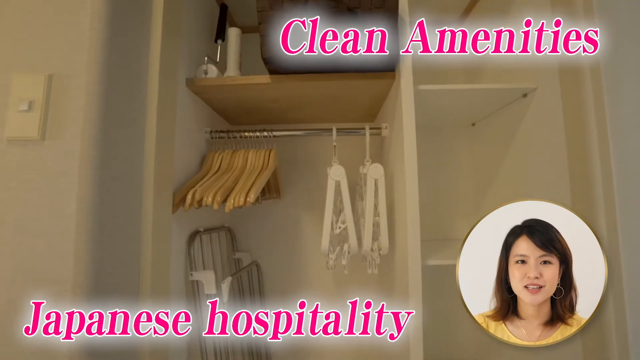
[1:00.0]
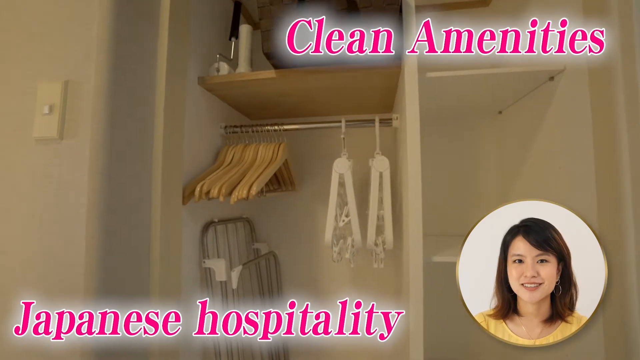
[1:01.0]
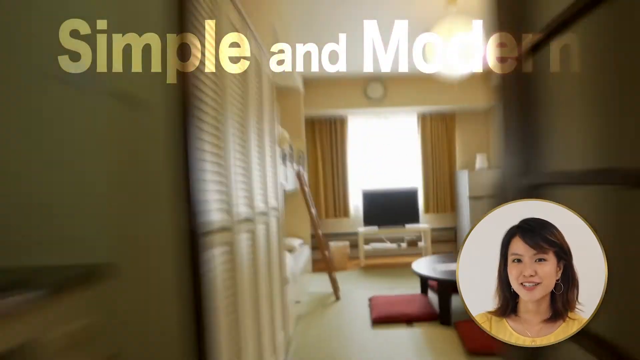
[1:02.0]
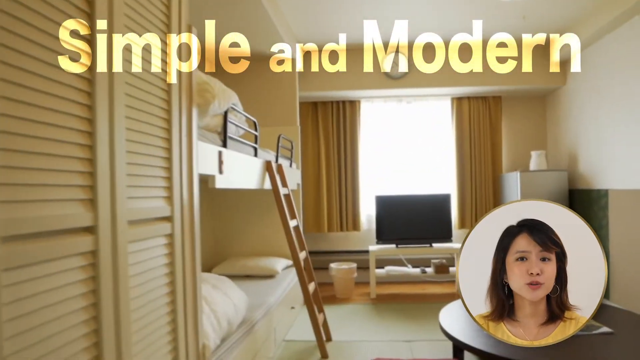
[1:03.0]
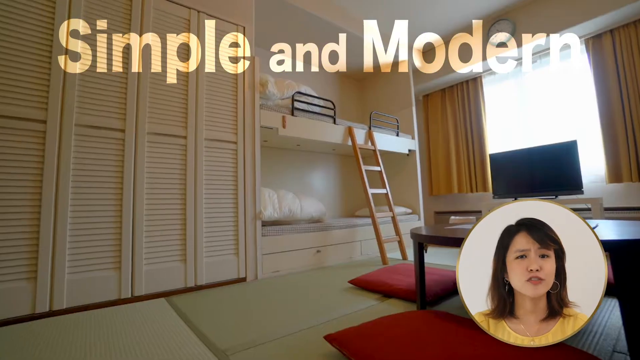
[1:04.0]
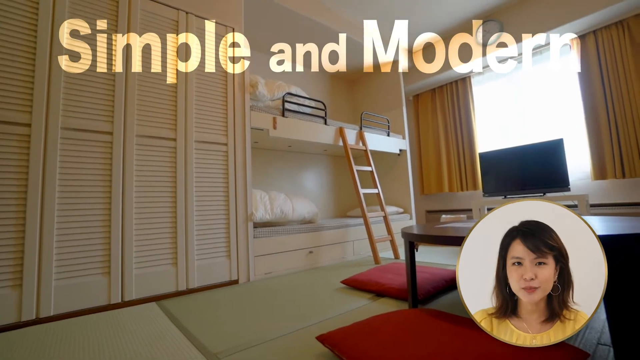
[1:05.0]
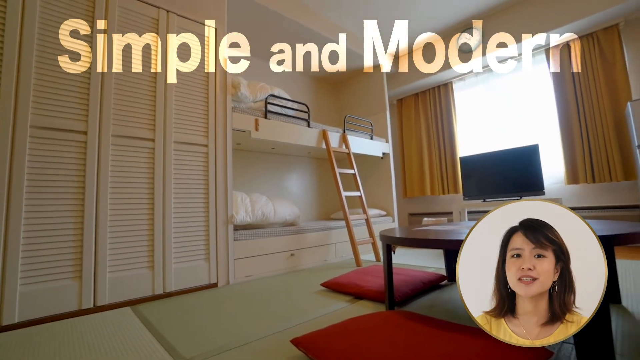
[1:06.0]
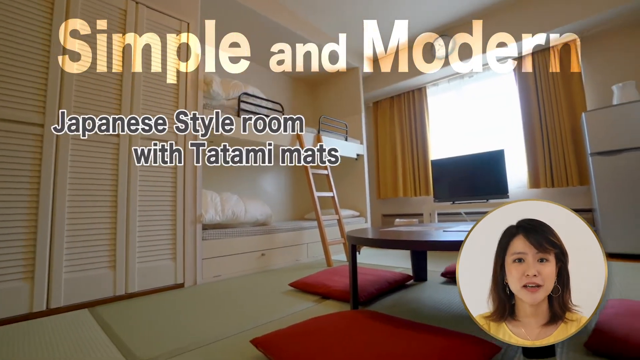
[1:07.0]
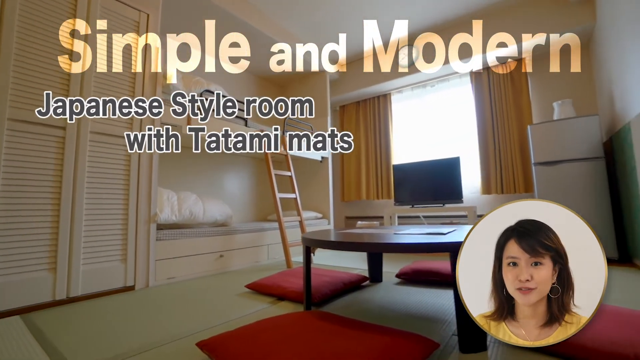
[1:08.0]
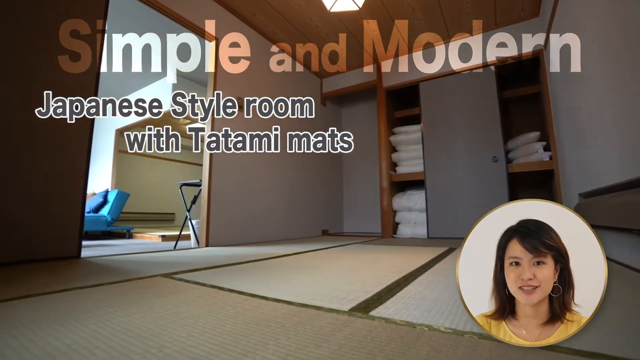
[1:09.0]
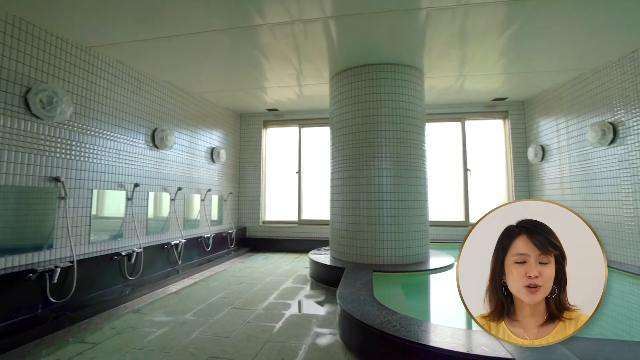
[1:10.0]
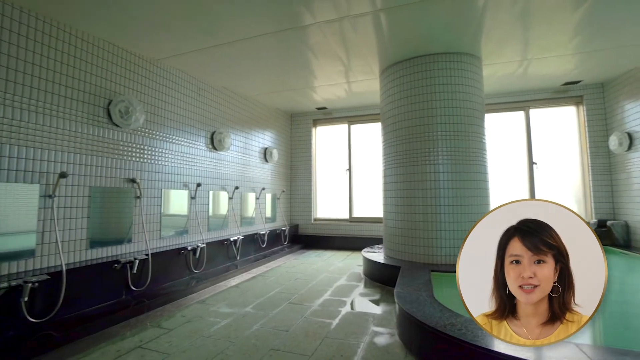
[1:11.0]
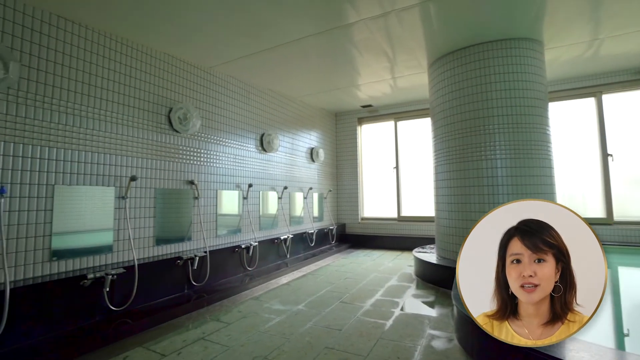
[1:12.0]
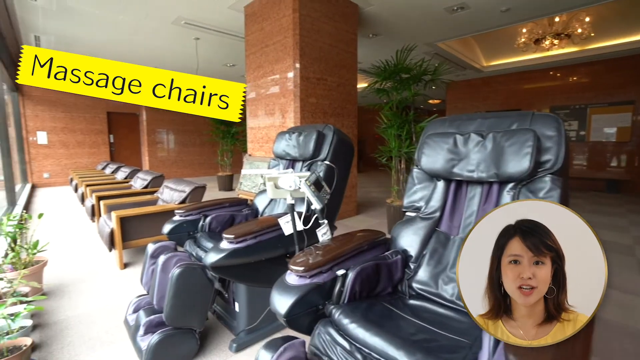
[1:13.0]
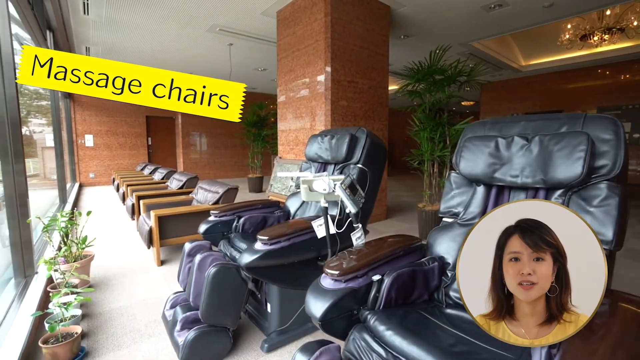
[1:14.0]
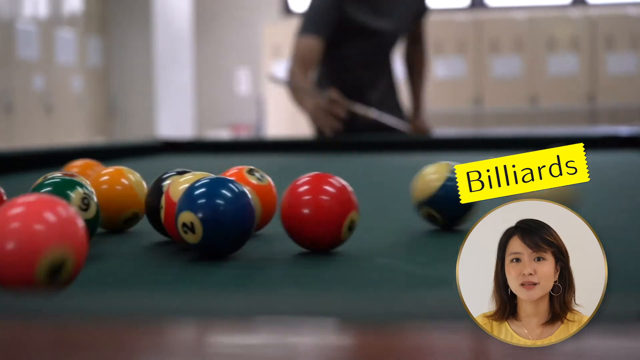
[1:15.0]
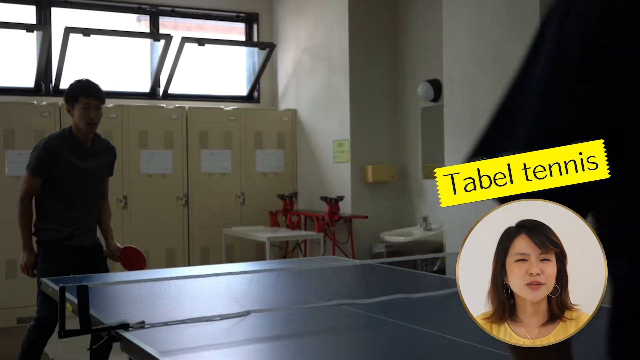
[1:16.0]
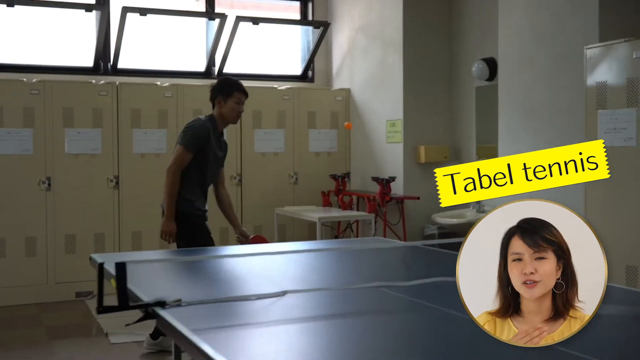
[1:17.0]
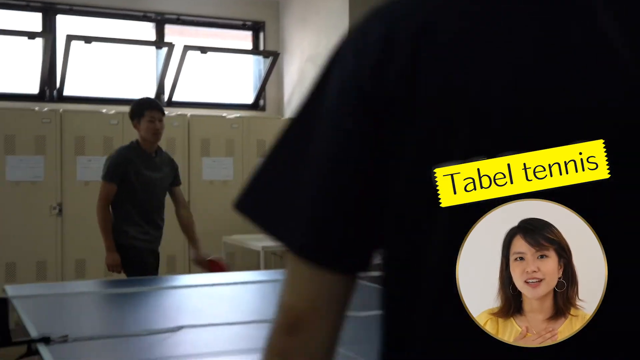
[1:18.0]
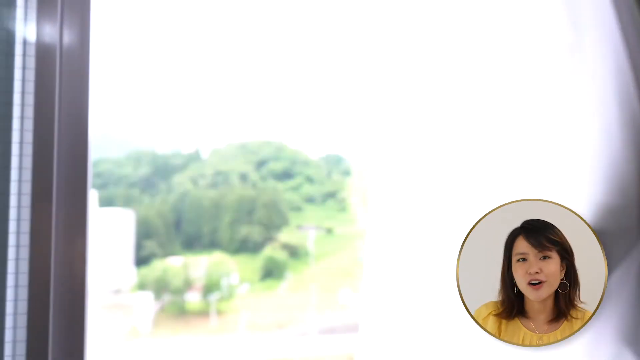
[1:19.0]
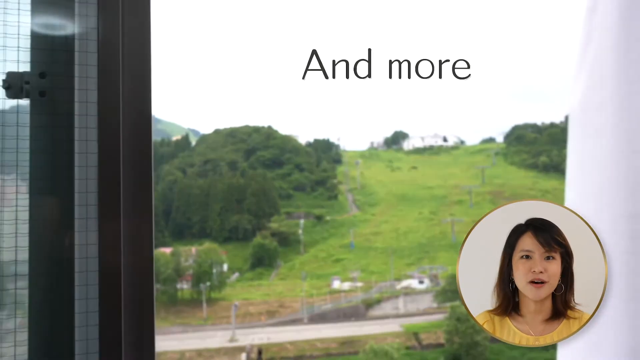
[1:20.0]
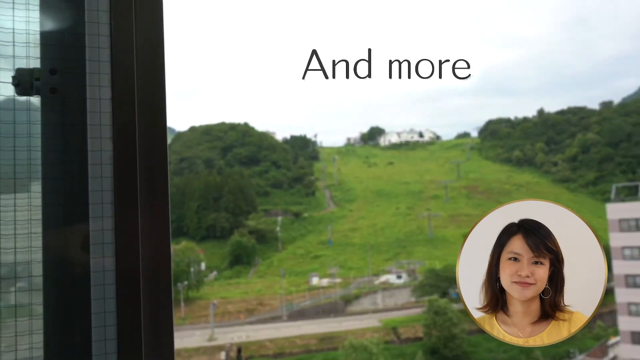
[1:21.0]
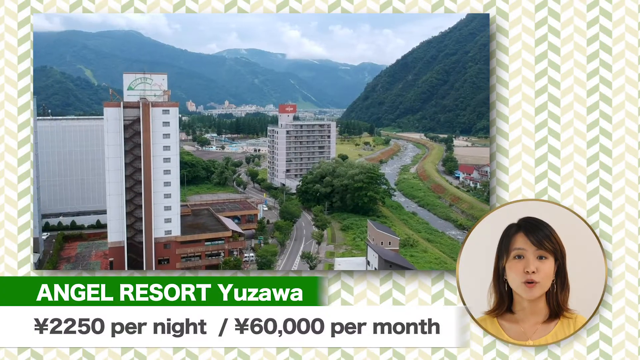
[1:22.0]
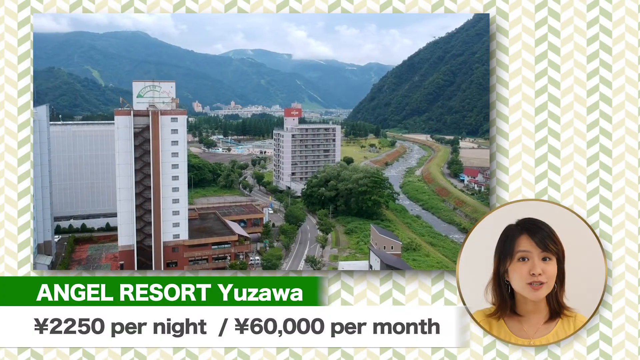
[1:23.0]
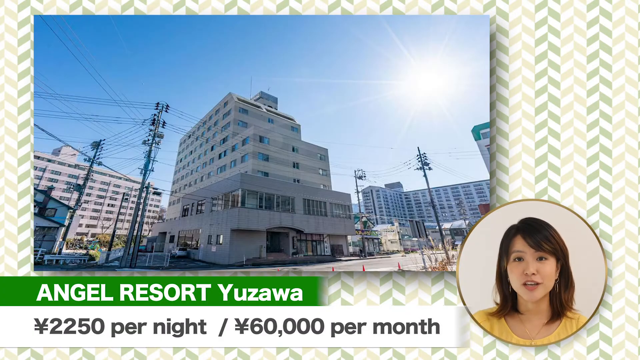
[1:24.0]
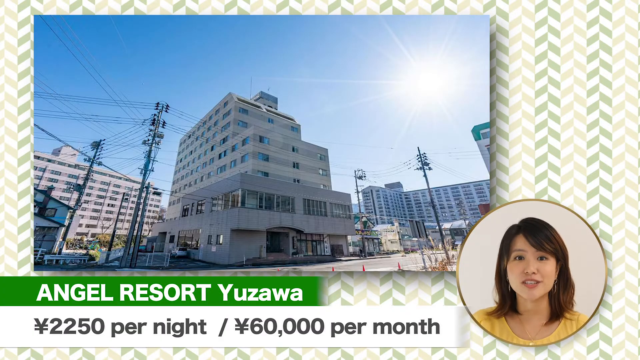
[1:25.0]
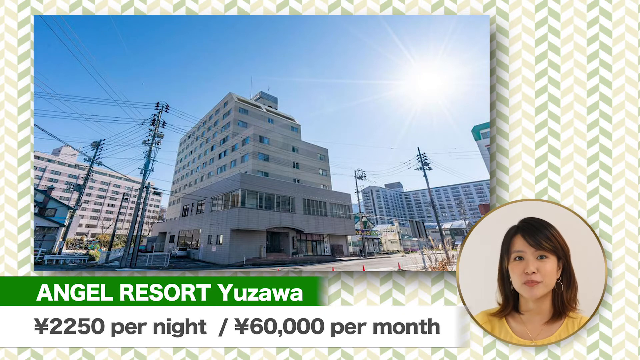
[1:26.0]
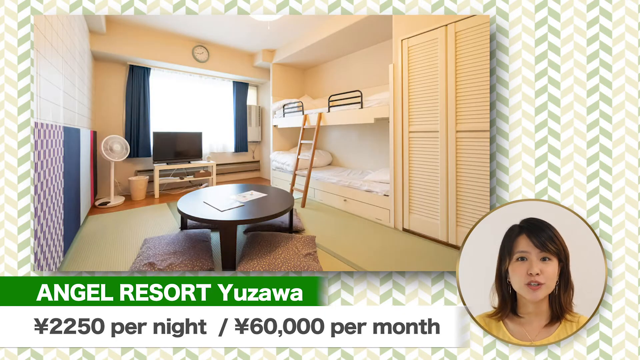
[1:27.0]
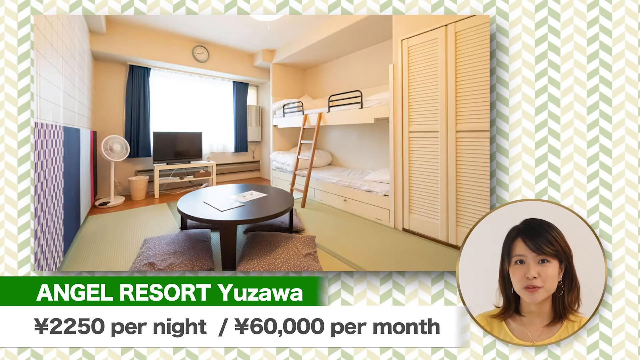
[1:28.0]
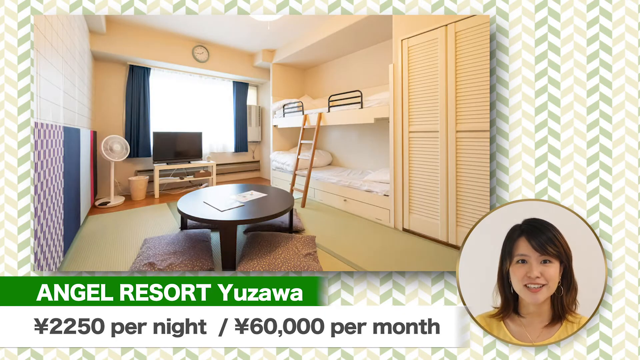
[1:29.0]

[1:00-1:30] With the same narrator, what looks like a different room is shown. Text says "simple and modern Japanese style room with mats, massage chairs on the premises." There is a billiards room and table tennis. The view out a window shows the landscape surrounding the area, in the mountains. Text reads "Angel Resort, Yuzawa." Entering the room, there appears to be a little kitchenette area on the left, bunk-style beds, and a little living area with a TV. There appears to be a communal bath. Prices appear to be 22.50 yen per night and 60,000 yen per month. This room appears a little older, dingier and smaller than the others shown. There is a pool.